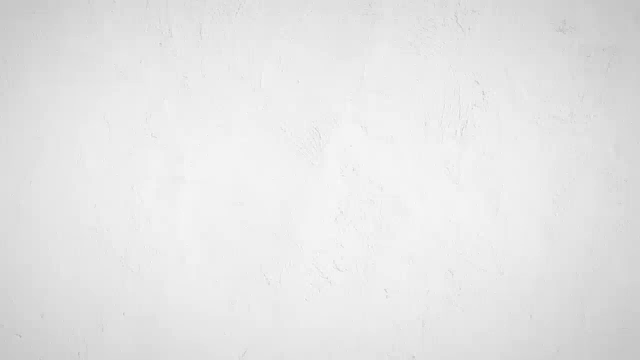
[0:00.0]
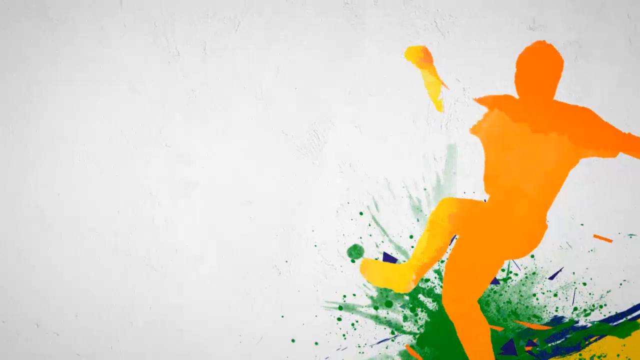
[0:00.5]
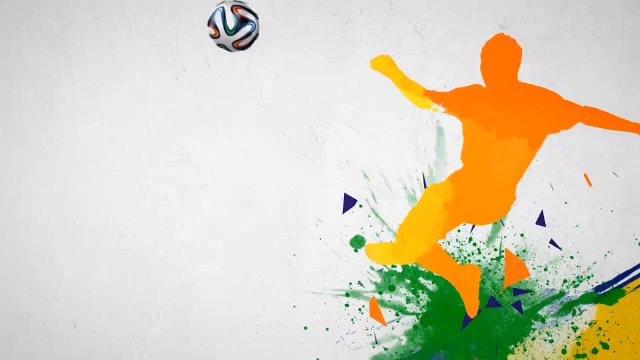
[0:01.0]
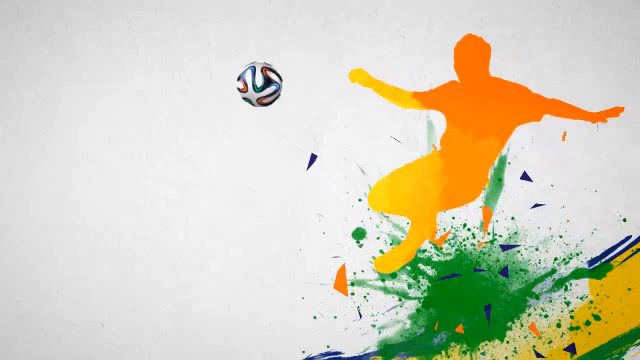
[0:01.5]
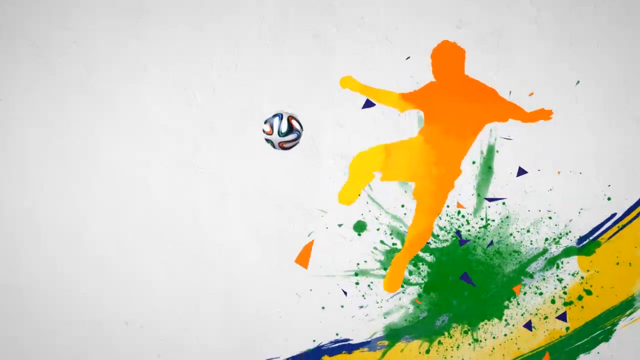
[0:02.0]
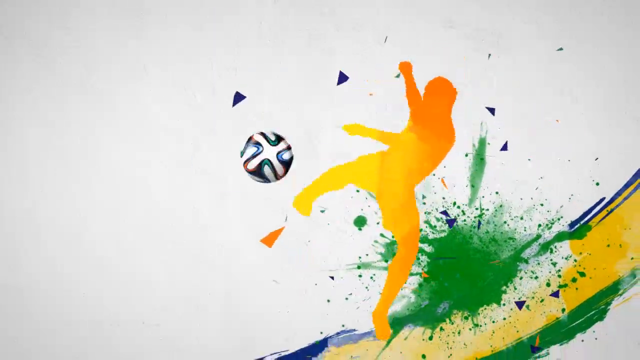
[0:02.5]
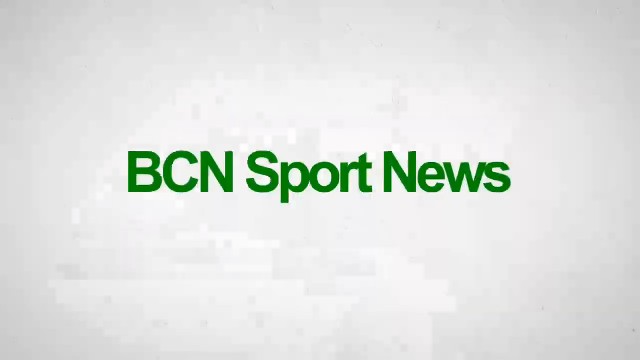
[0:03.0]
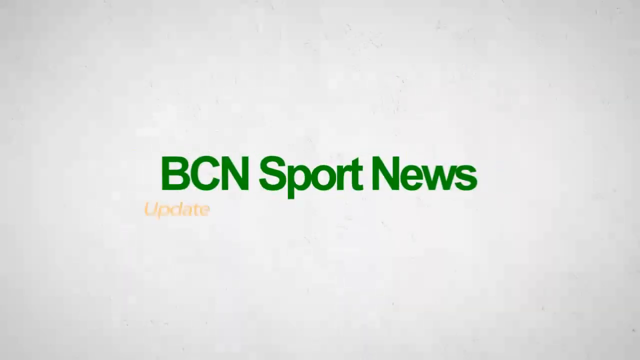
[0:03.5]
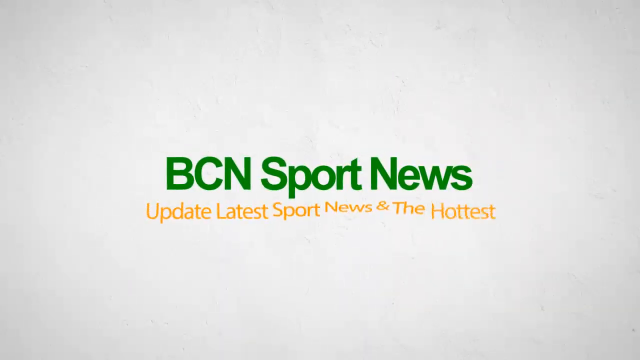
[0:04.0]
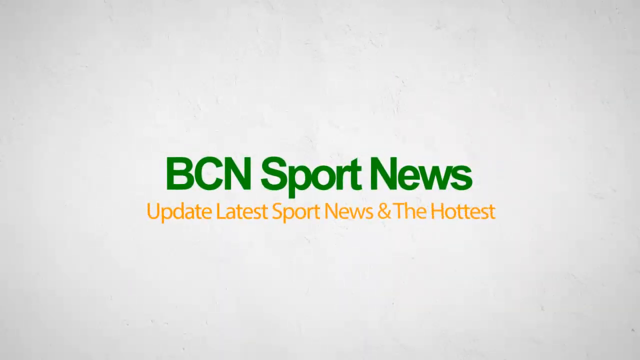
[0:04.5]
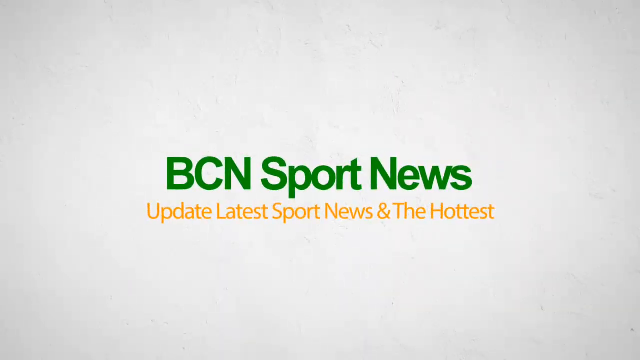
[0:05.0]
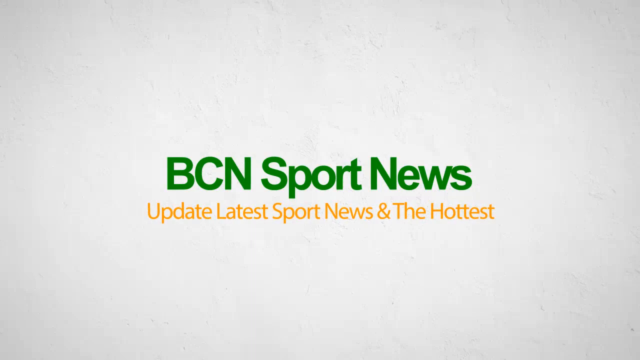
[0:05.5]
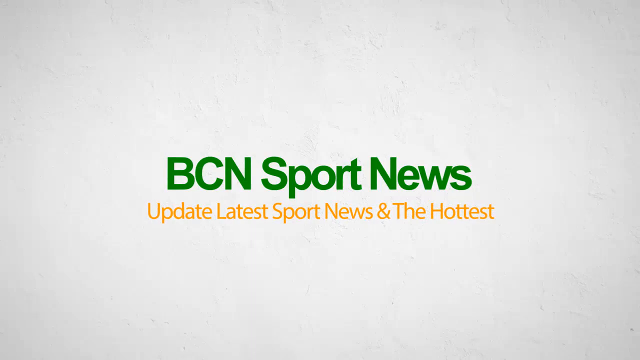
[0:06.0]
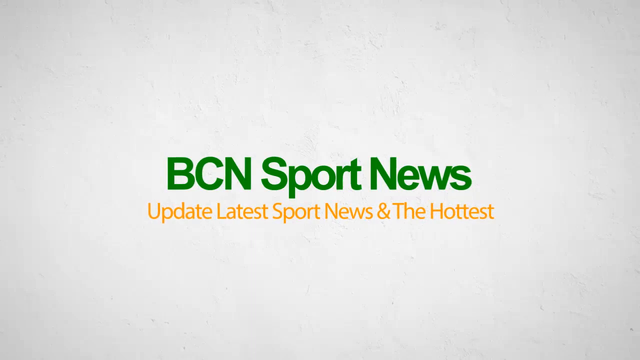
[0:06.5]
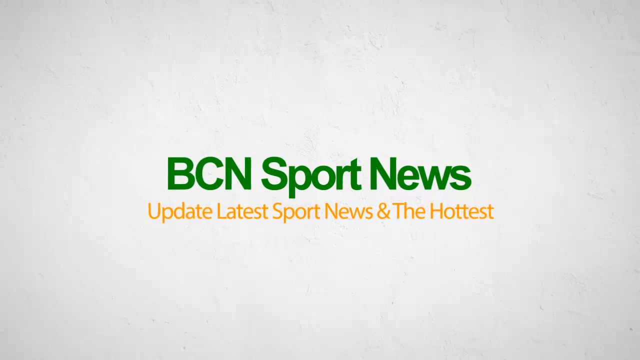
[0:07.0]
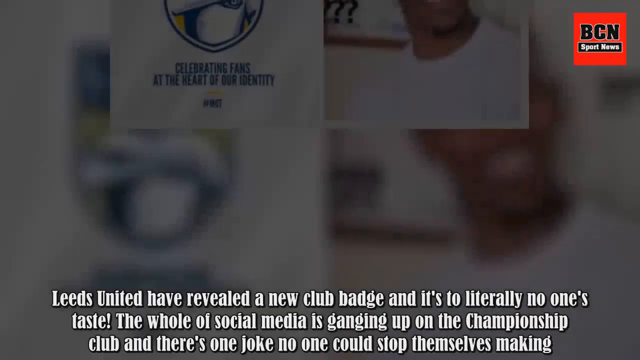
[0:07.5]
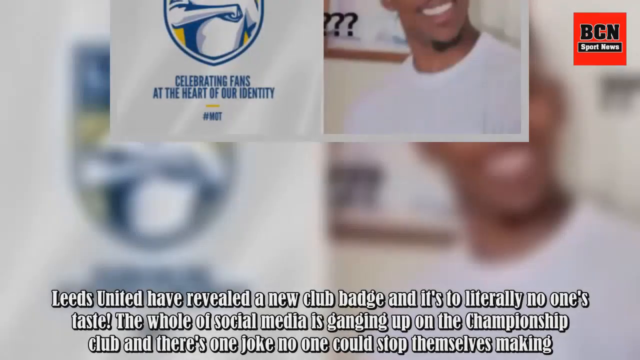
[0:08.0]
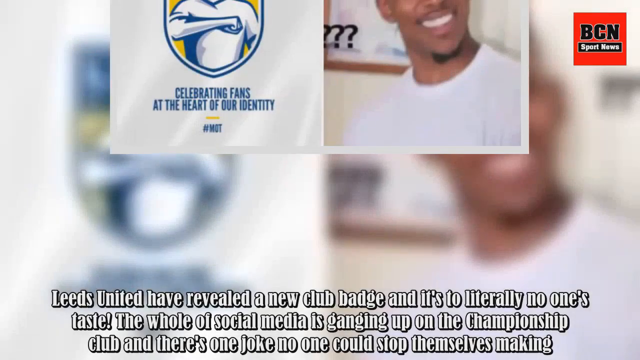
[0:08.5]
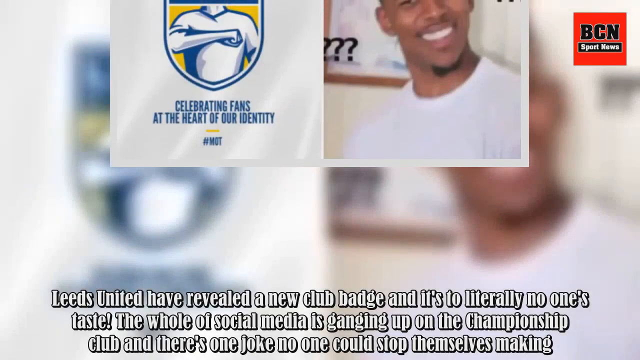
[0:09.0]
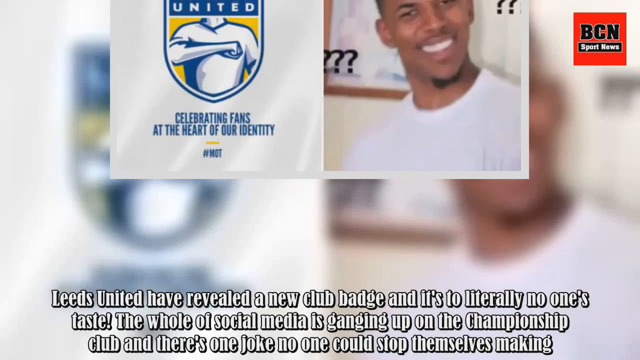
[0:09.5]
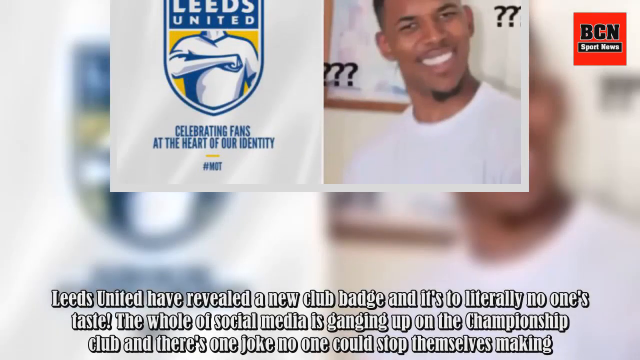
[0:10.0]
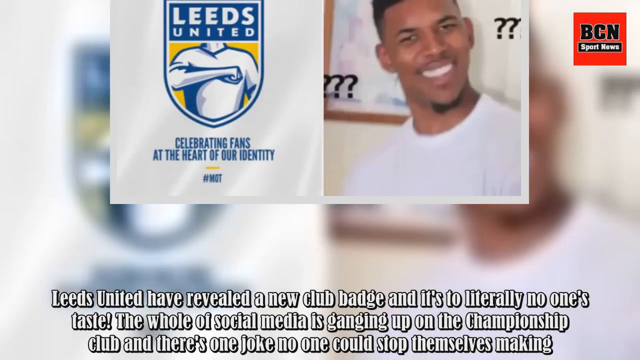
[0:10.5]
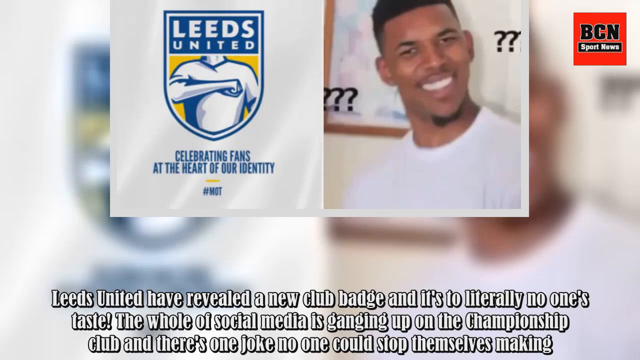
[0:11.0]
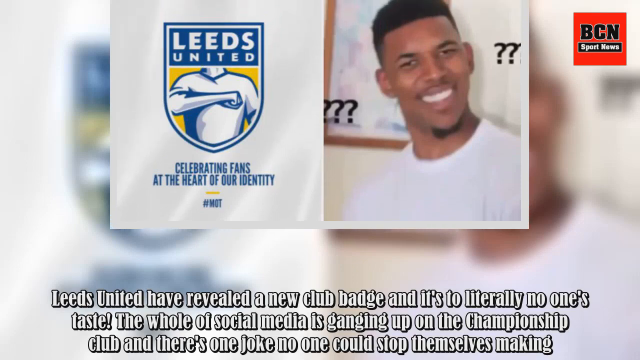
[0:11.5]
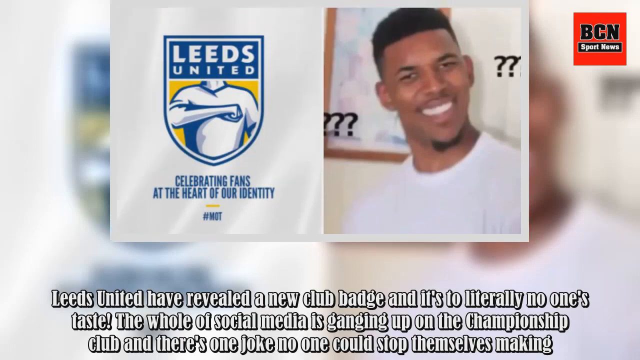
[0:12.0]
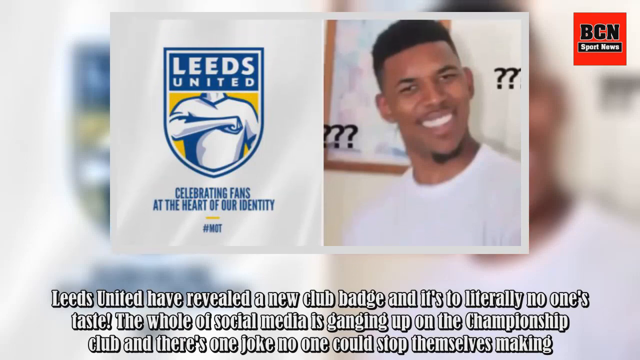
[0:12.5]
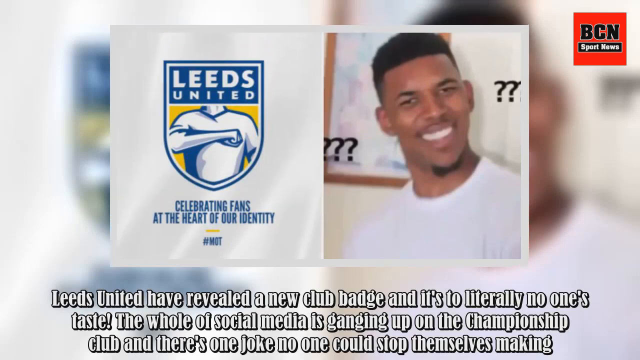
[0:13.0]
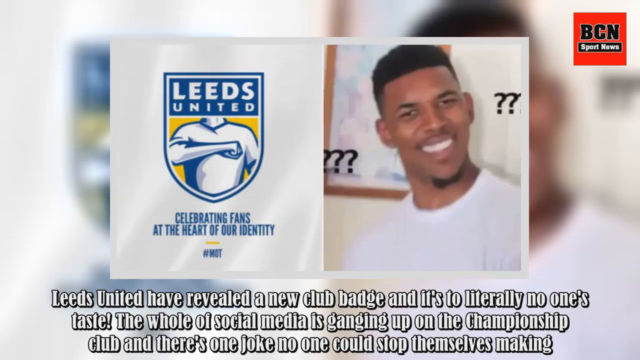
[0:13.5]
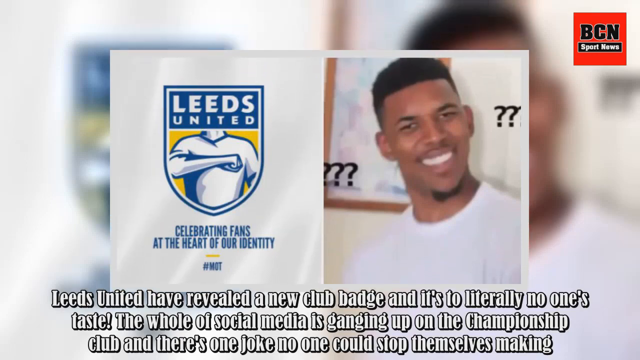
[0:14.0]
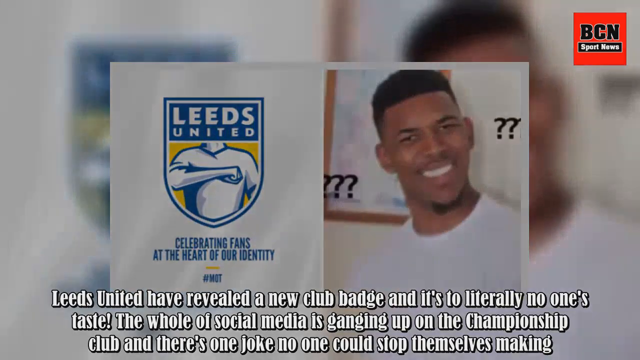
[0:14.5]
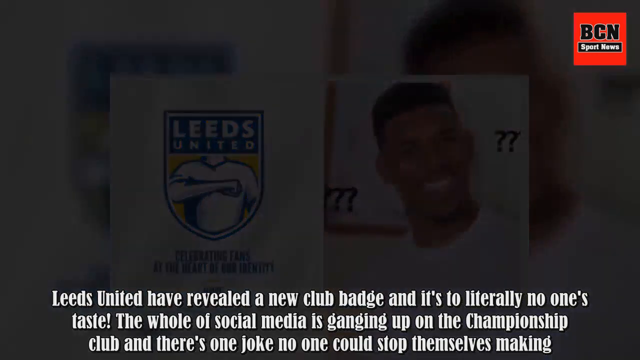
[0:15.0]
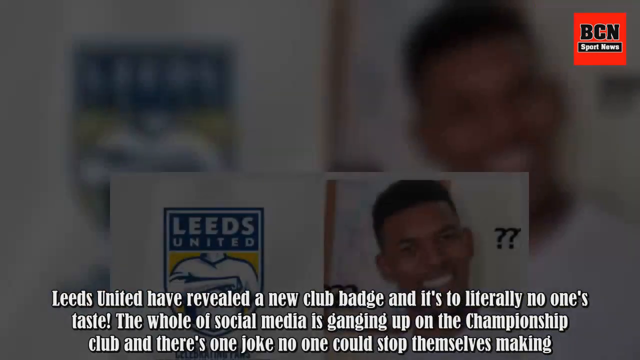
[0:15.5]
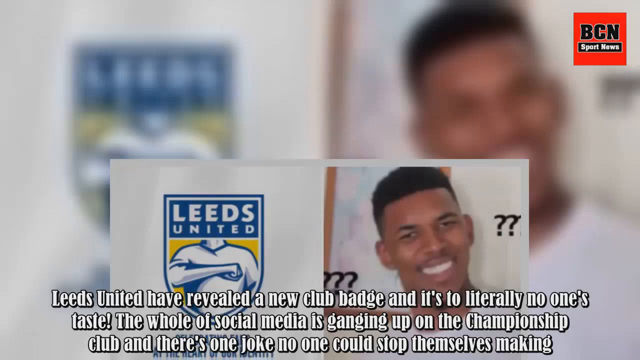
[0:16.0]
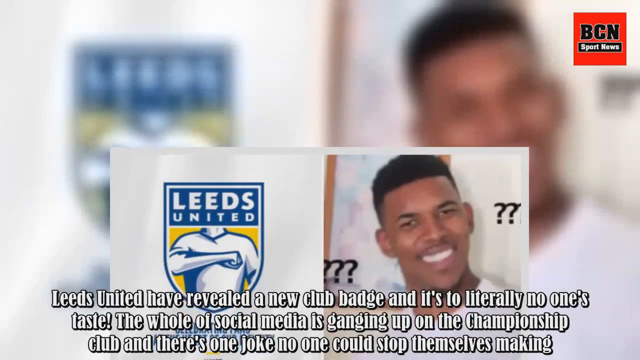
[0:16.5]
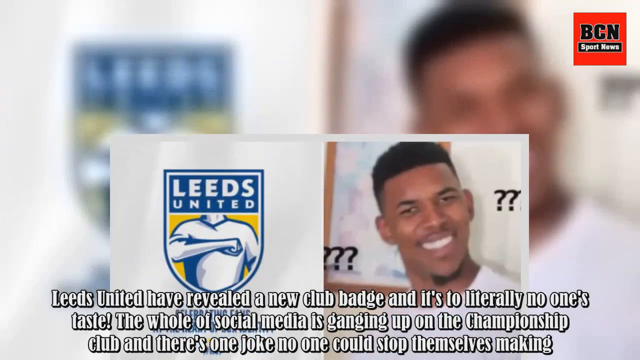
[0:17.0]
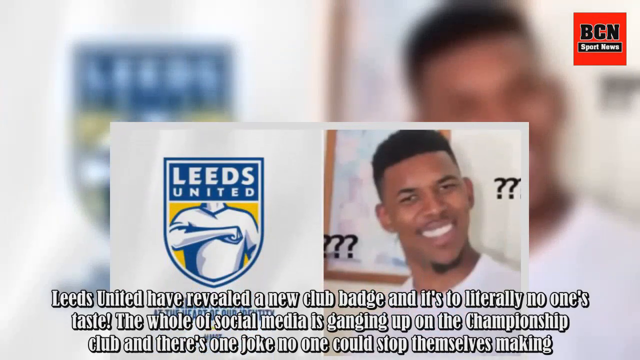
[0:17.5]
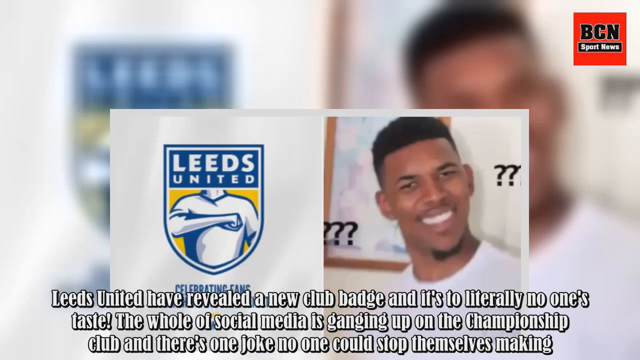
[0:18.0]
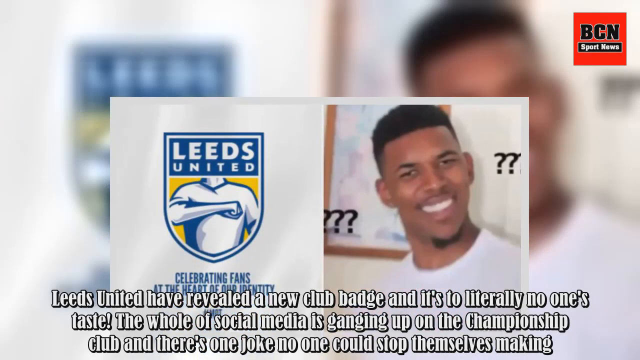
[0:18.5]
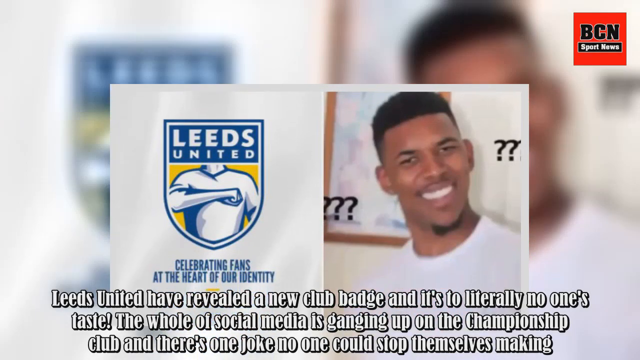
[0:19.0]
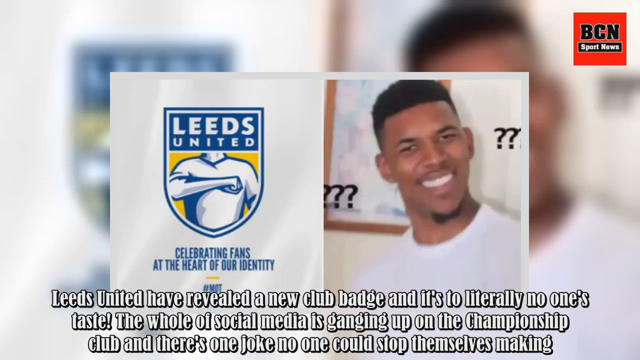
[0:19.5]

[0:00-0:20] A silhouette of what looks like a soccer player is mostly orange, with the legs fading toward yellow. A soccer ball comes in from the left side of the screen, and the silhouette seems to get ready to kick it, then kicks it with the right foot, sending the ball straight in front of the camera. On the lower right side of the background is a splash of green paint with streaks of yellow, green and blue paint; the rest of the background is white. The video cuts to a slide on a white background with green text reading "BCN sports news" and orange text underneath reading "update latest sports news and the hottest". It then cuts to an image of a smiling person in a white t-shirt on the right, with "Leeds United" on the left. The image slowly moves from the top of the screen toward the bottom, and beneath the Leeds United logo, blue text reads "celebrating fans at the heart of our identity". As the image continues toward the bottom, it kind of blacks out a little, comes back into view, and moves back up. Behind it is the same image, blurred. The smiling man has two black question marks on the left side of his face and two black question marks on the right side.